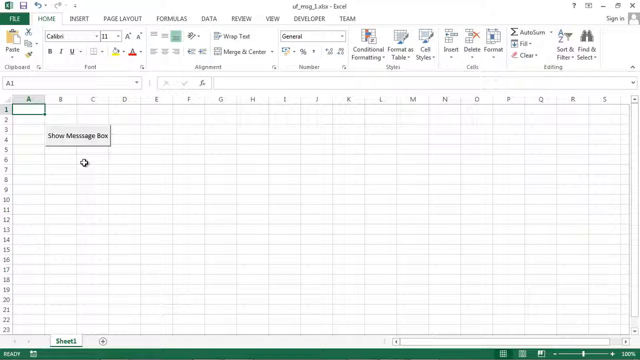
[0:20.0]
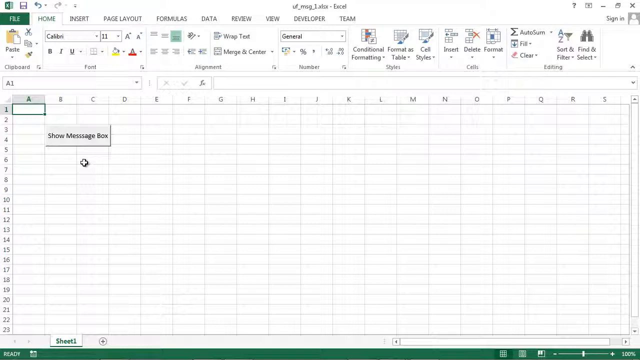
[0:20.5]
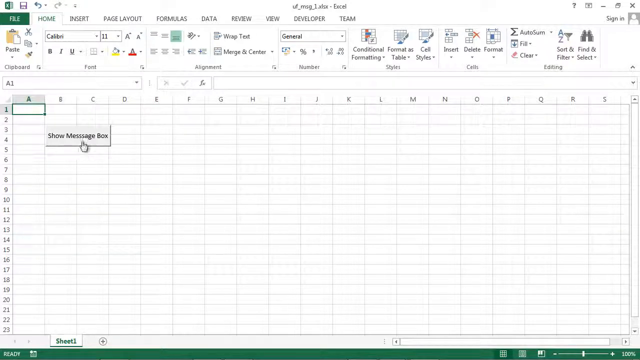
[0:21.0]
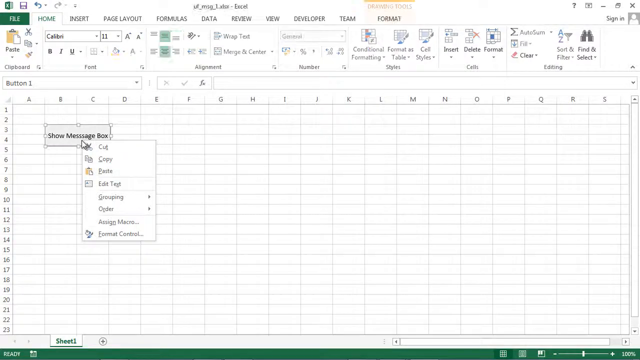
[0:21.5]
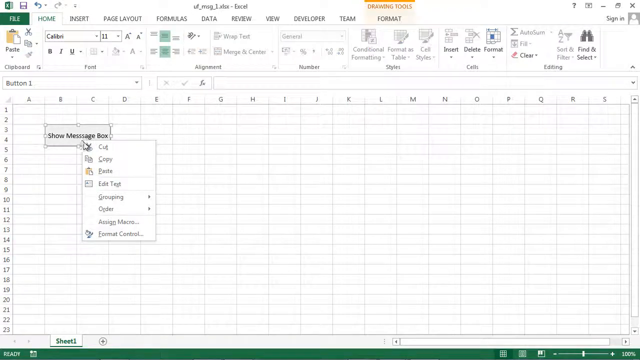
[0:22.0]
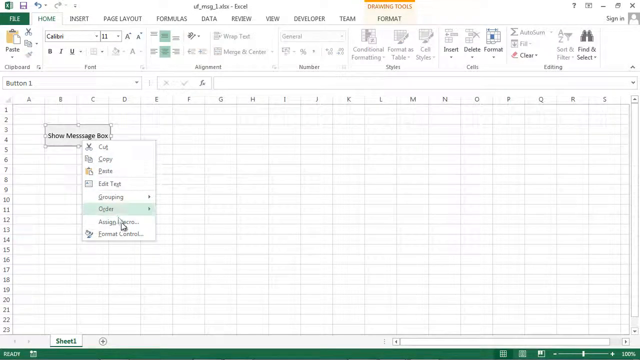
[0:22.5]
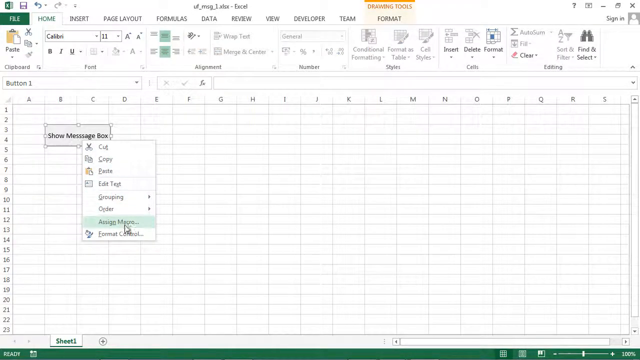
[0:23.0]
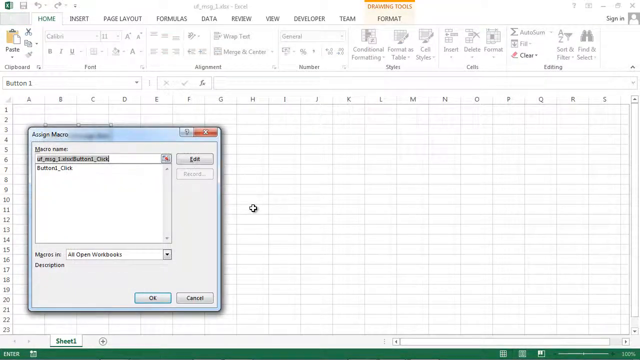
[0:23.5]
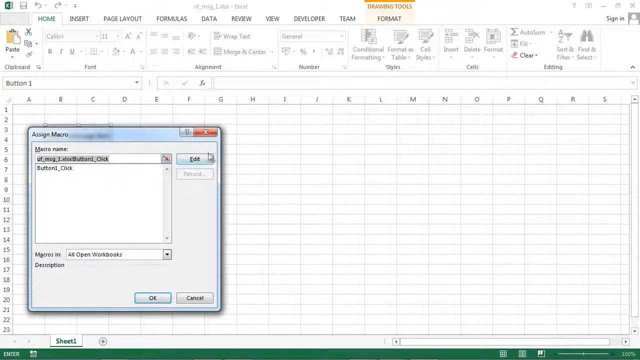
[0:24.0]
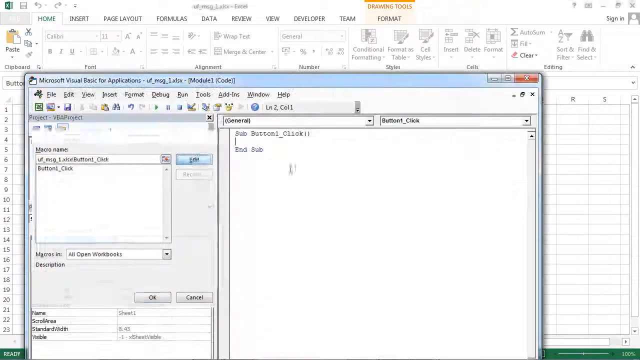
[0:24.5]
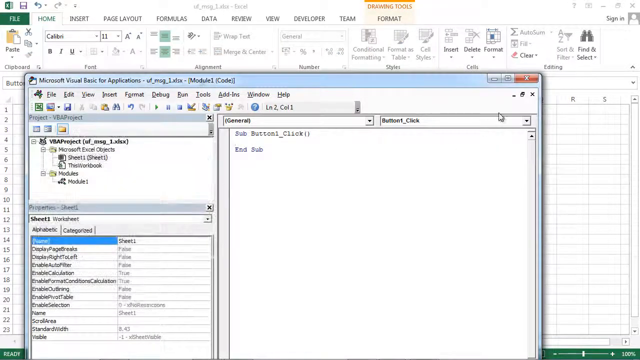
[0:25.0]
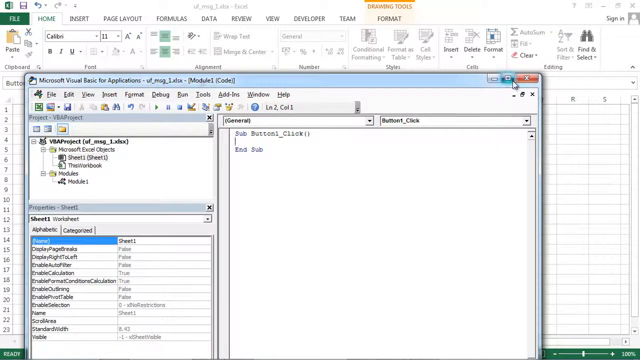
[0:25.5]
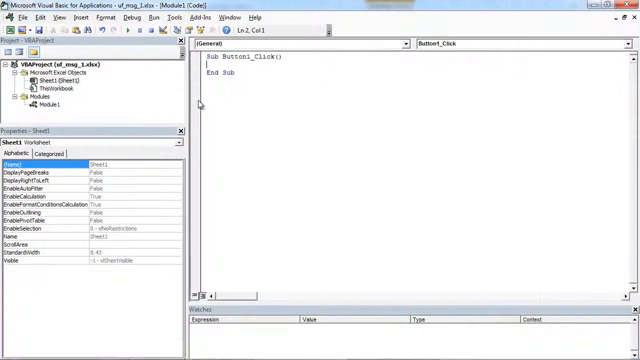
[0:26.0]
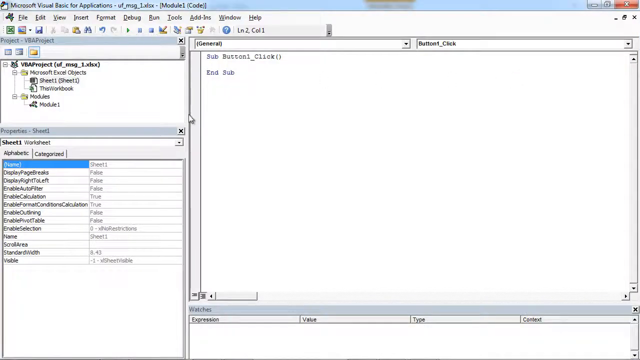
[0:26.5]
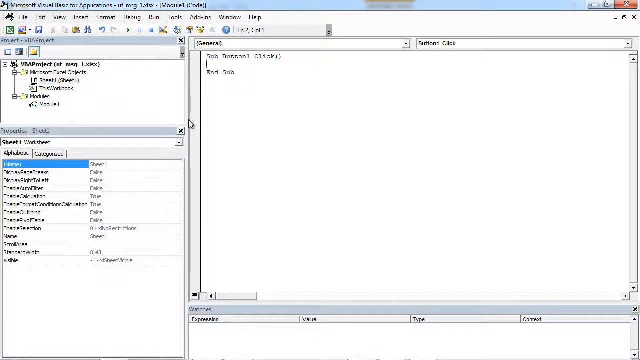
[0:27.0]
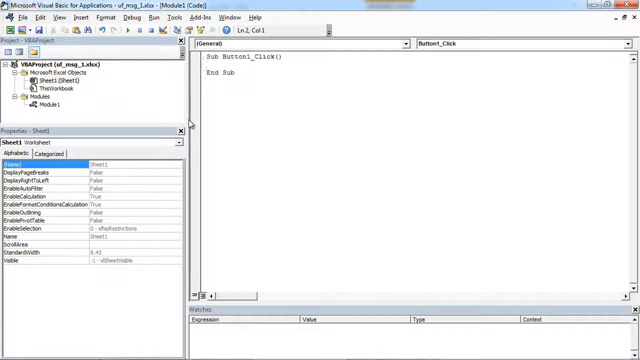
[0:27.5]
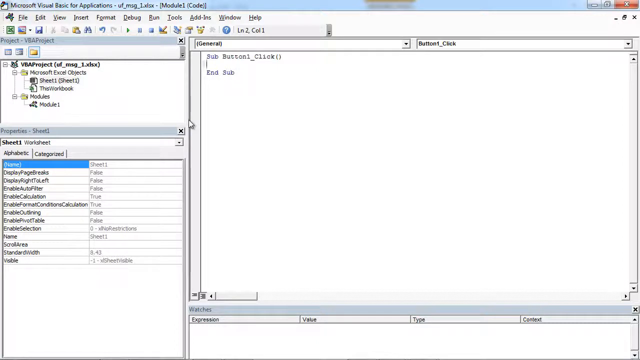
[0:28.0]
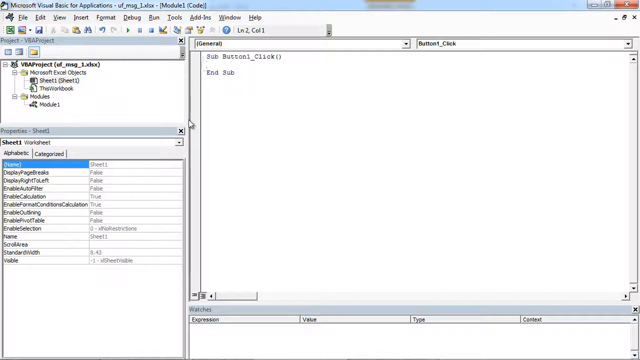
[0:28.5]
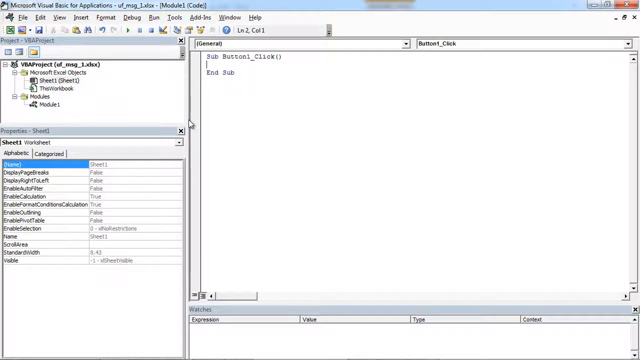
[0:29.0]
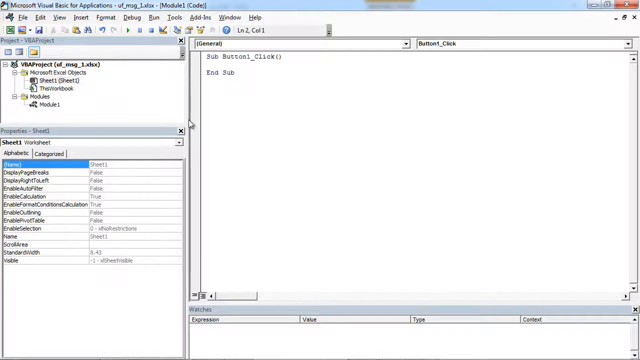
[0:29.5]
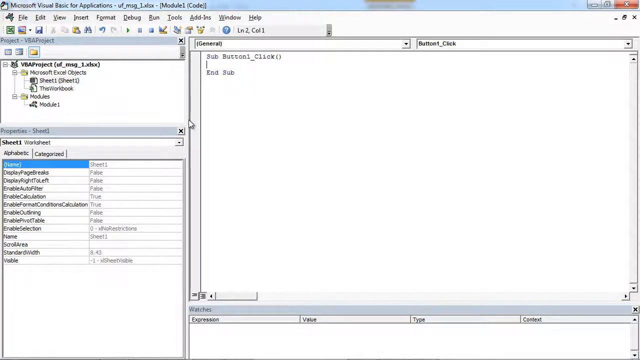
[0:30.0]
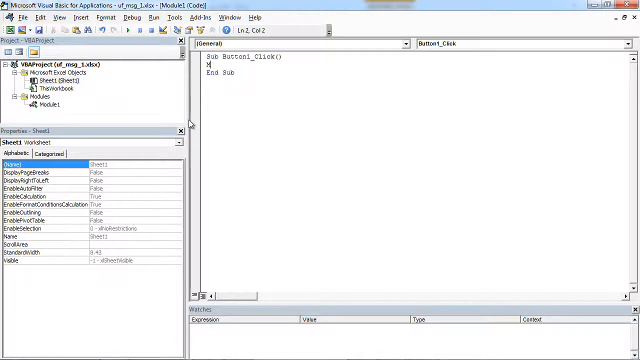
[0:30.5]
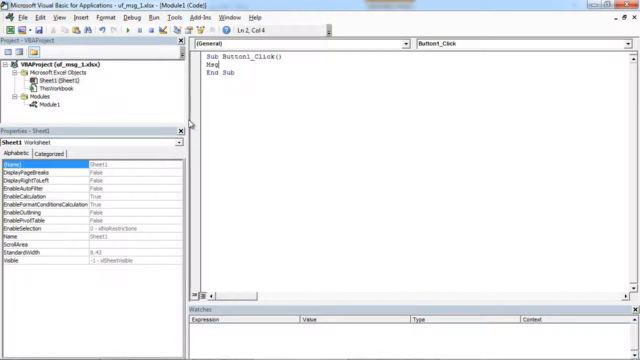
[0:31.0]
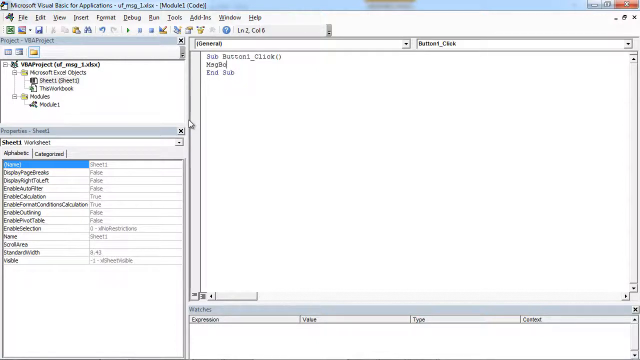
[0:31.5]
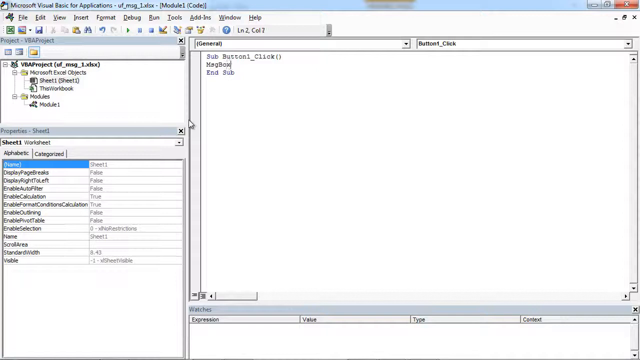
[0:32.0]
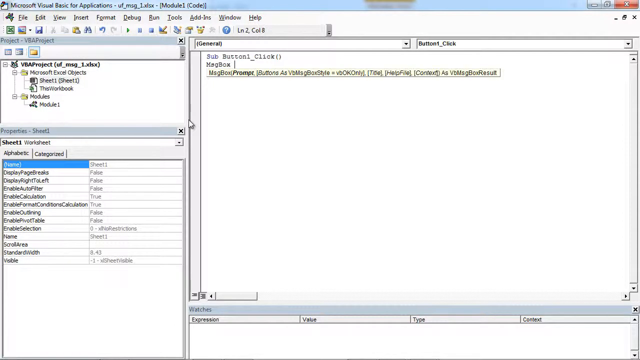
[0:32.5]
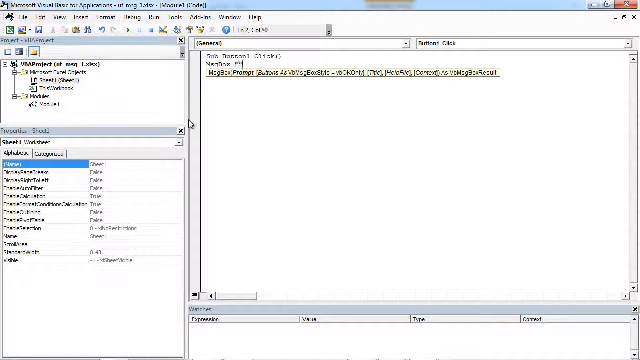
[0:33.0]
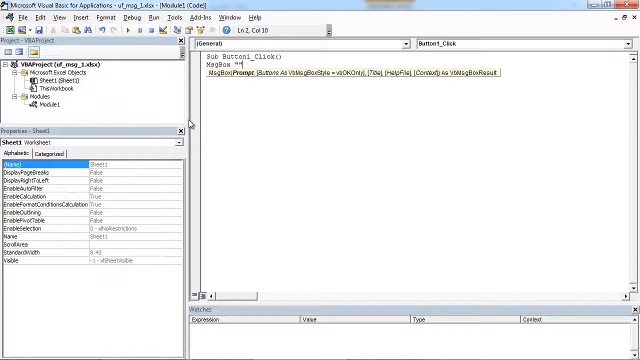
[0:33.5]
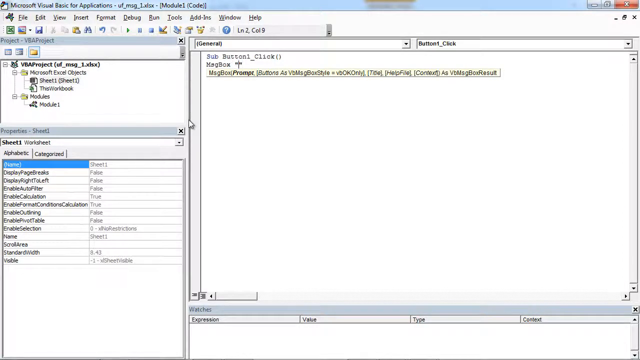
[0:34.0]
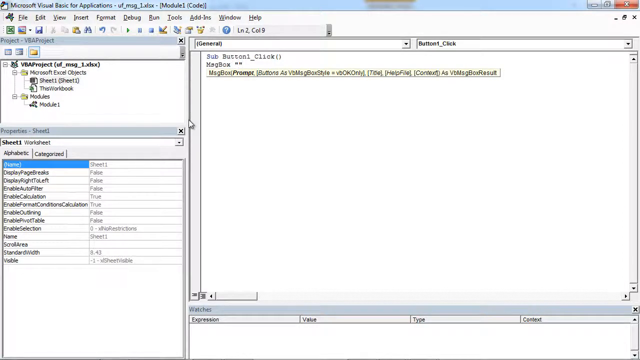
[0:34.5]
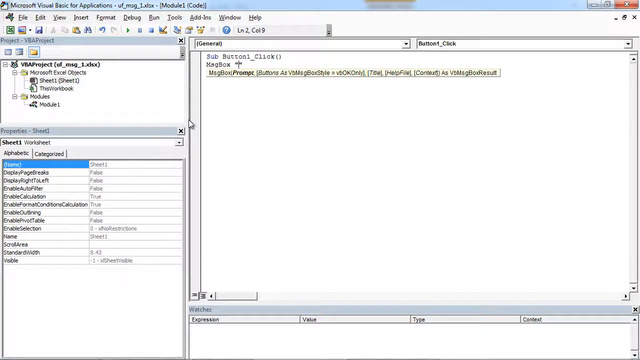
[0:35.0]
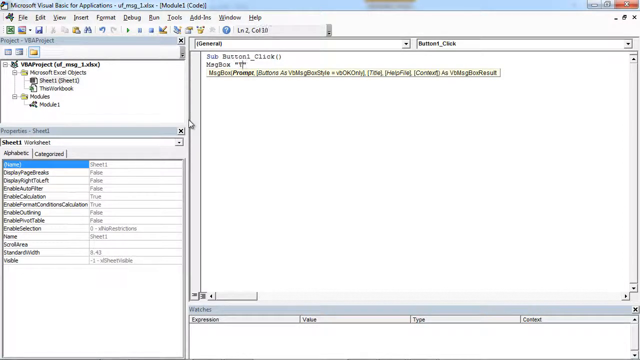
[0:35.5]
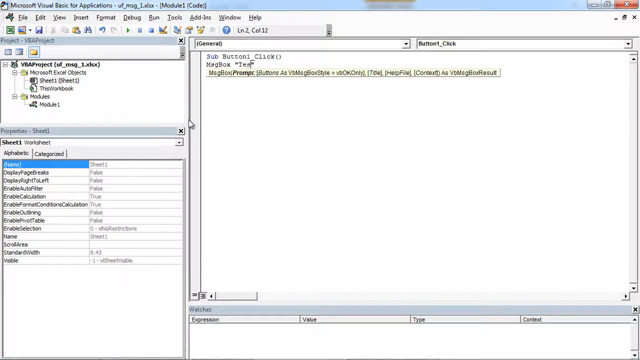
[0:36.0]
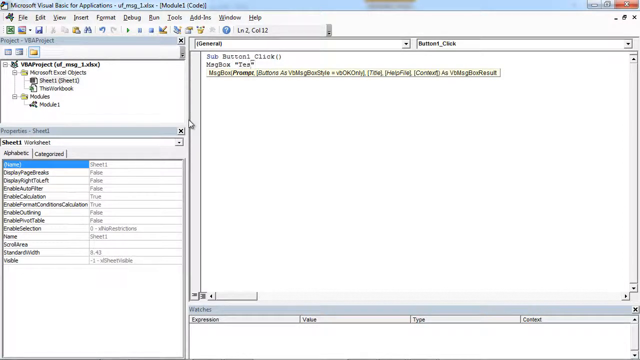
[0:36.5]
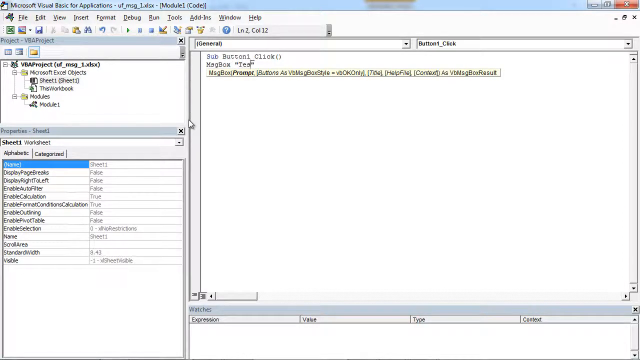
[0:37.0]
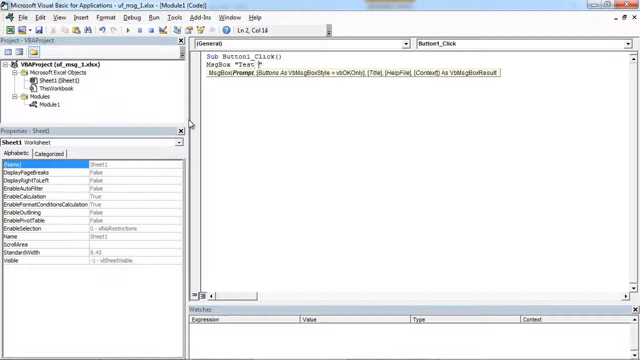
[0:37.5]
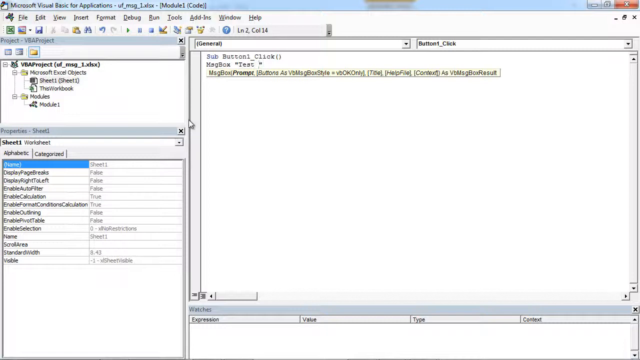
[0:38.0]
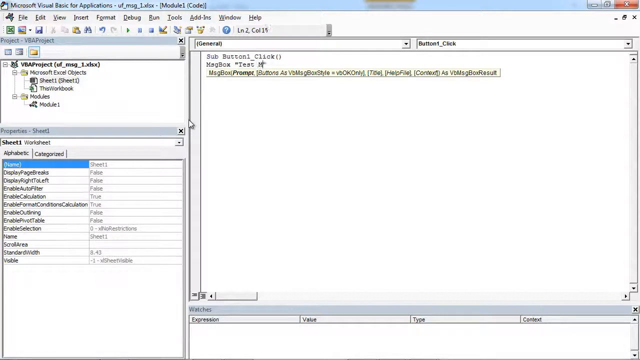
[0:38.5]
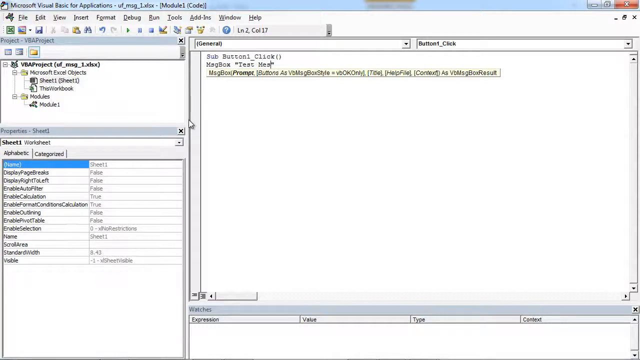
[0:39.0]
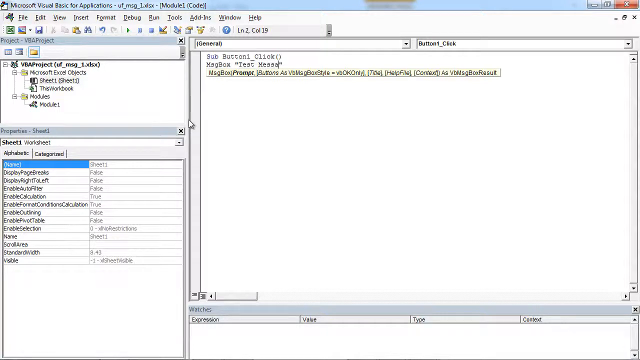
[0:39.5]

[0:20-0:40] Microsoft Excel is still displayed, with the File, Home, Insert, Page Layout, Formulas, Data, Review, View, Developer and Team tabs and the cells at the top, along with the file and paste options. The scale apparently remains at 11, the text is still general, and everything else is at default. Sheet1 is shown, and it opens on assign macro. Afterwards, Microsoft Visual Basic for Applications is opened, and under the matchbox, a text message and a few prompts are entered. The Sheet 1 and matchbox prompt have just been added, the button click is still on the side, and a text message is typed. Excel is used to add a macro on the message box, and afterwards Chrome follows on the next page.